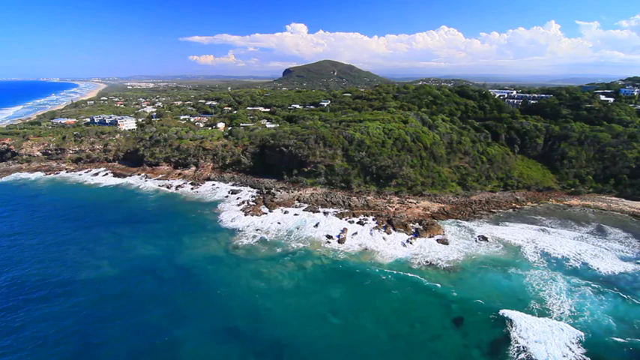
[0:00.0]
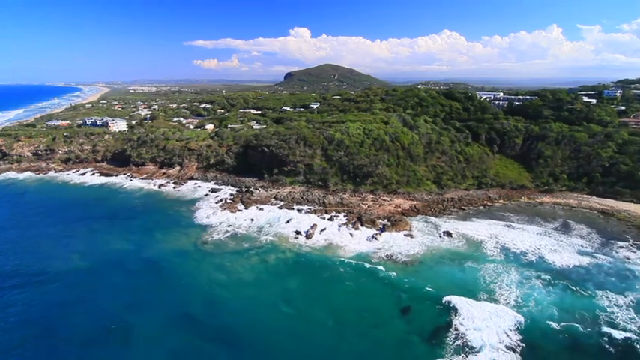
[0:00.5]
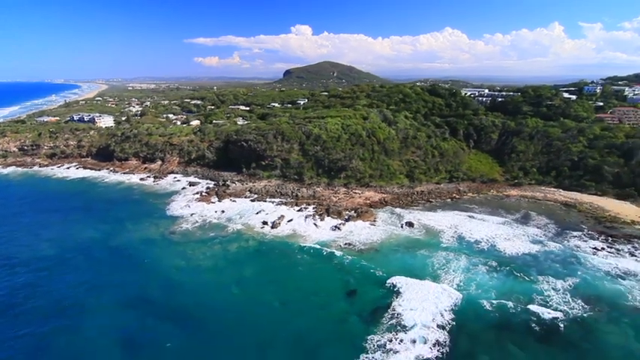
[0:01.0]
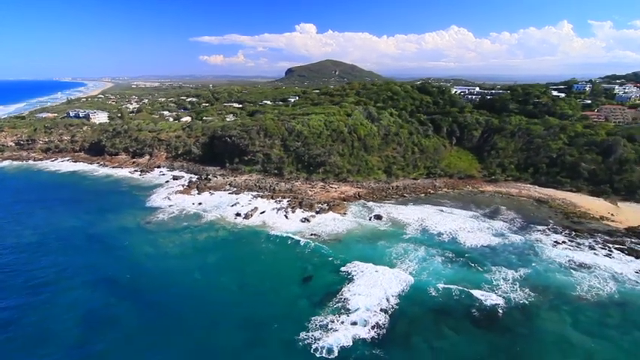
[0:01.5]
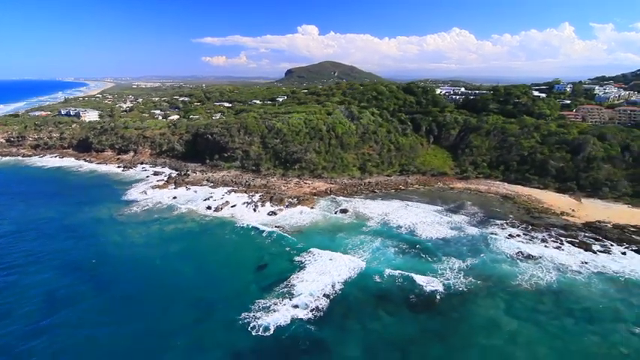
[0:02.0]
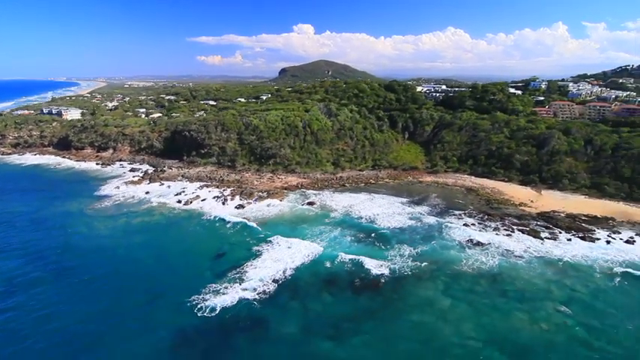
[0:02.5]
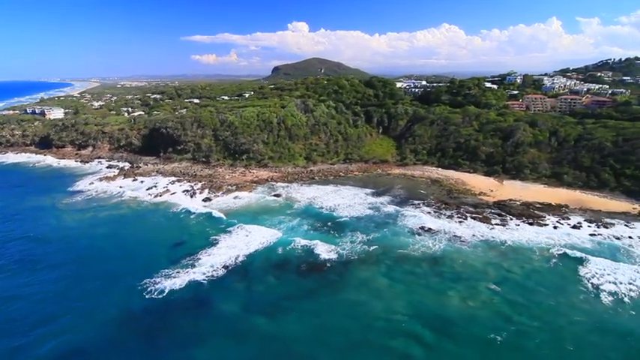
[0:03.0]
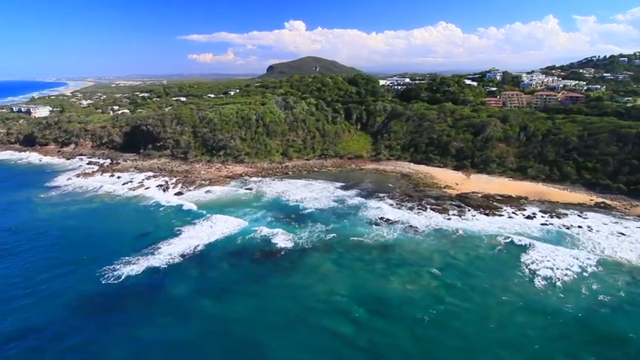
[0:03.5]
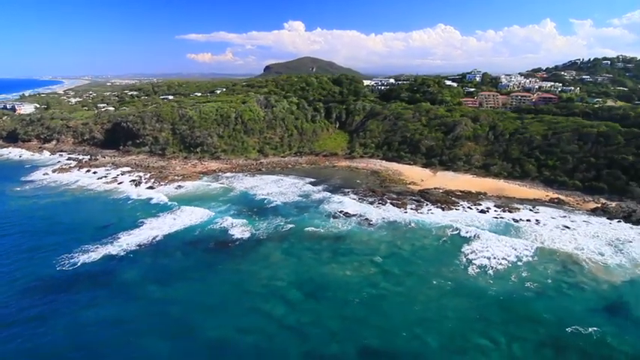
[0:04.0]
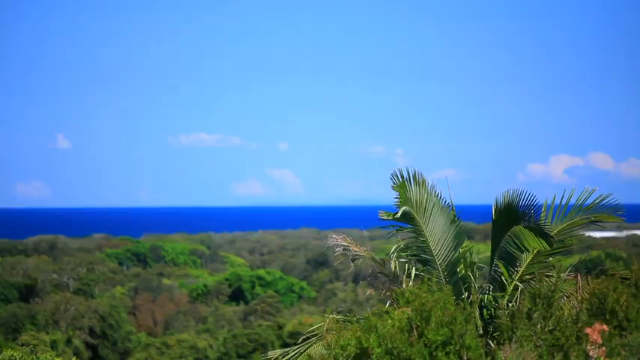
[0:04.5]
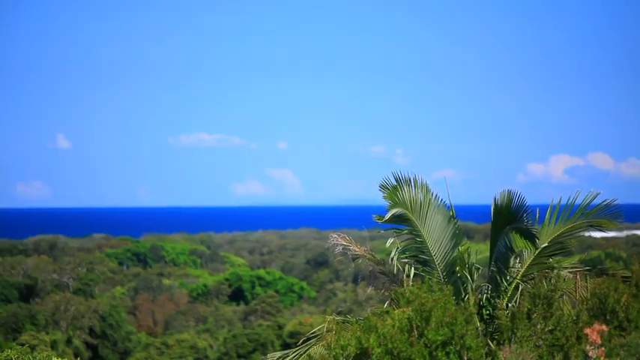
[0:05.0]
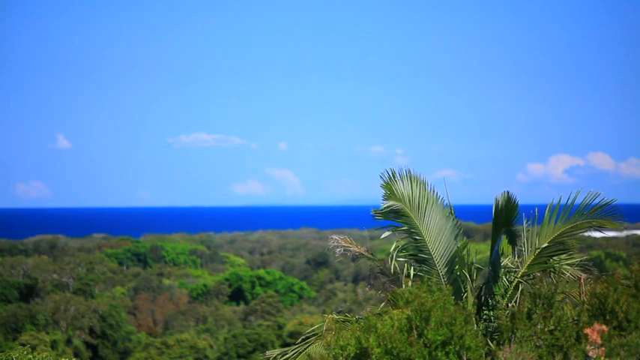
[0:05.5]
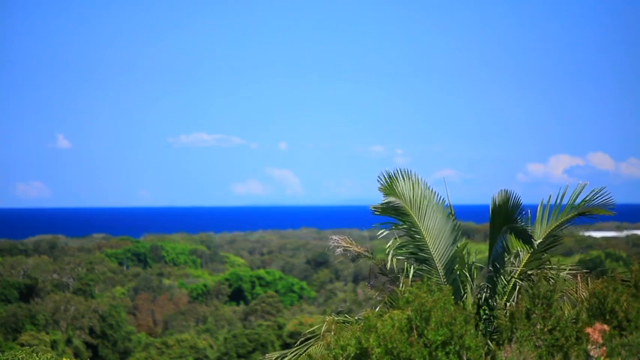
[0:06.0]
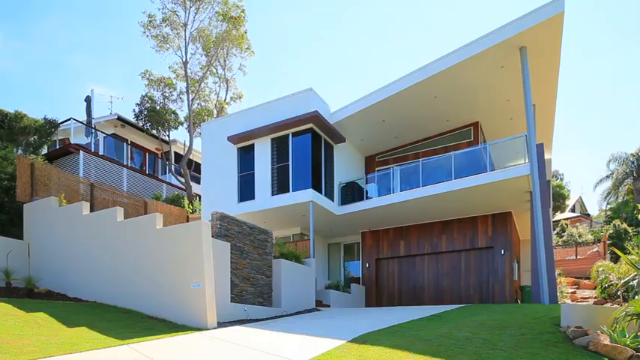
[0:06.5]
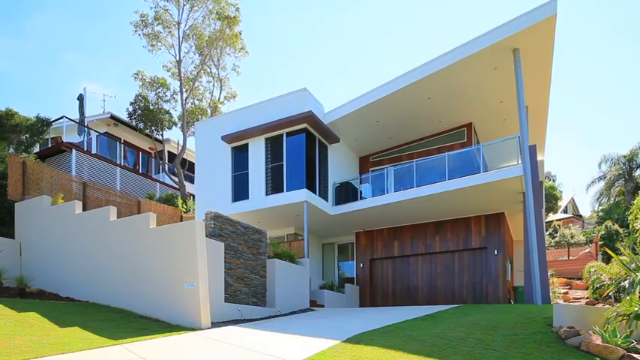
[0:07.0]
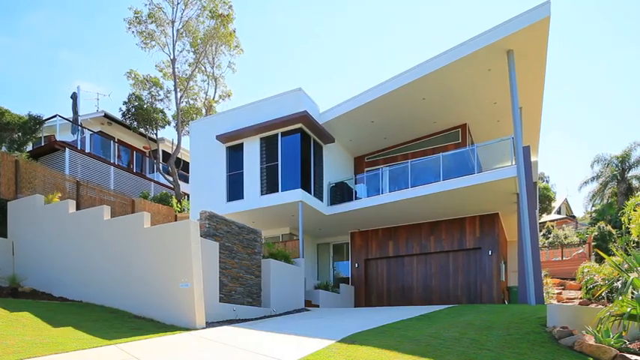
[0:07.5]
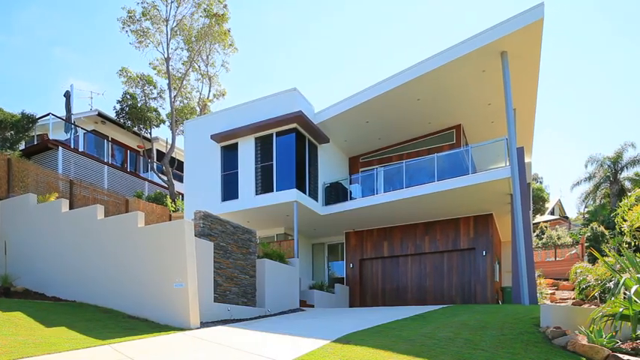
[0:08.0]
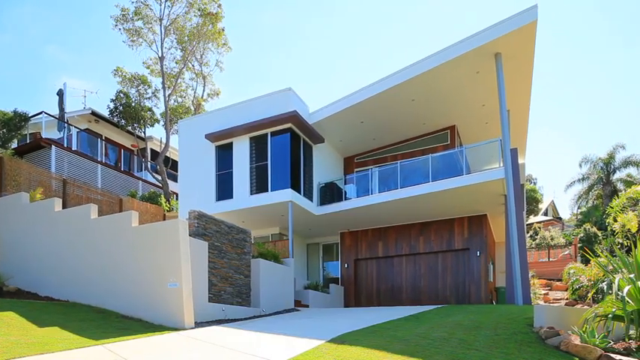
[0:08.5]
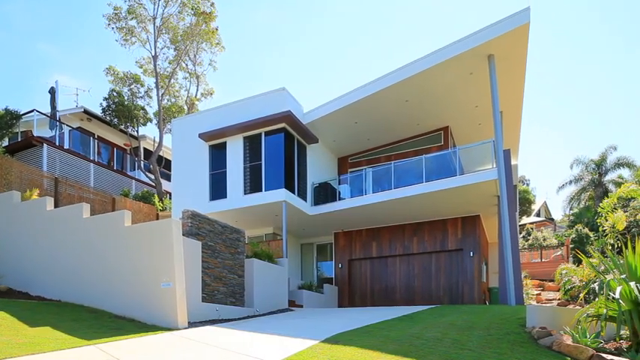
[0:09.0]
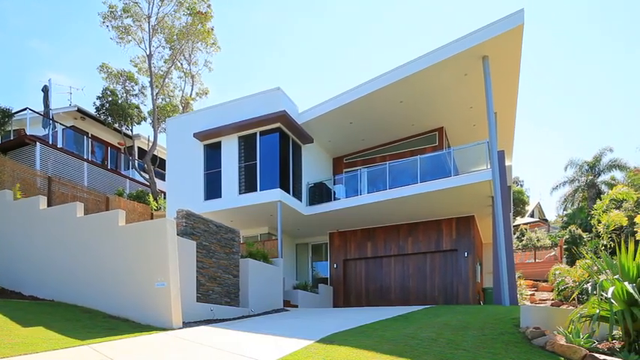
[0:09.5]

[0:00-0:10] An aerial view shows an island, focusing on its shoreline and beach area. There are a couple of spots of sand where people can walk off into the water, and a shallower area eventually comes into view. The video then cuts to a land view showing plants growing out from the bottom and blowing in the wind. Next, a giant house appears, apparently by that area; it looks really tall.